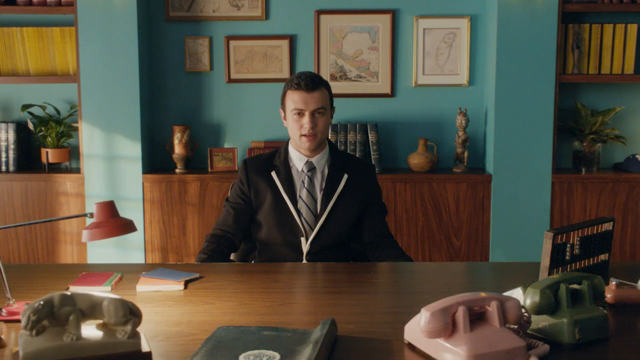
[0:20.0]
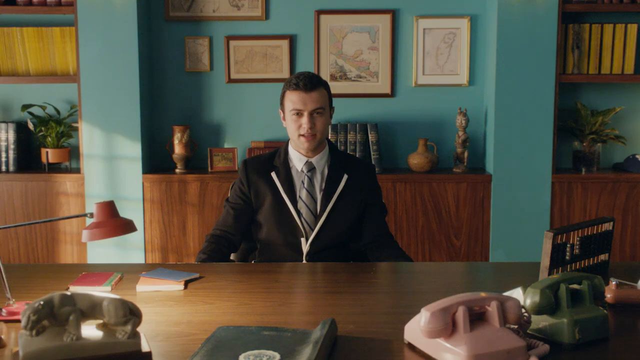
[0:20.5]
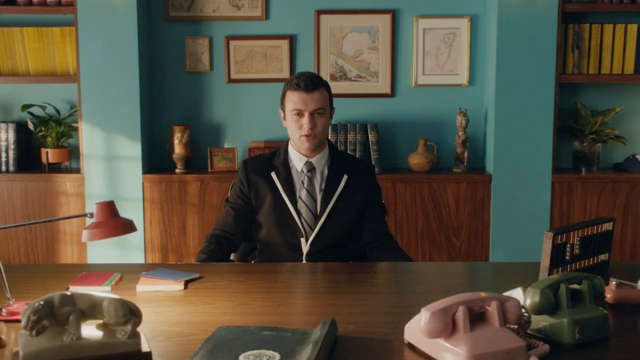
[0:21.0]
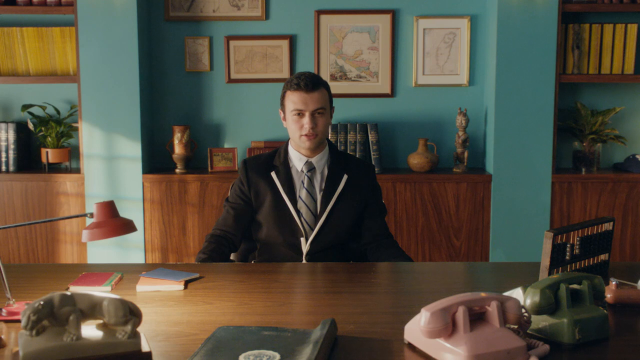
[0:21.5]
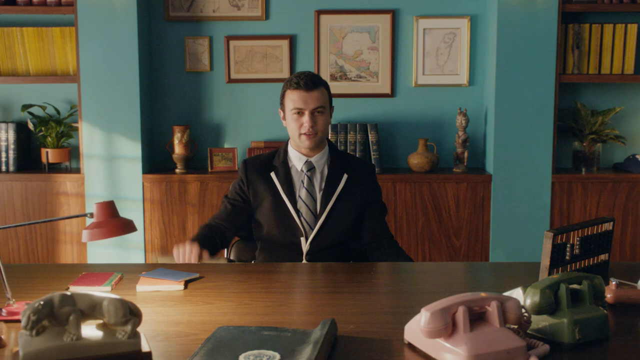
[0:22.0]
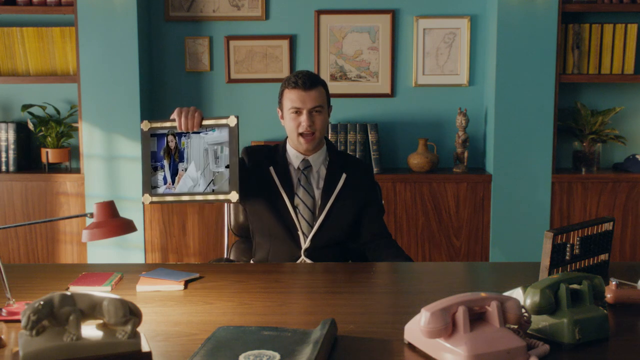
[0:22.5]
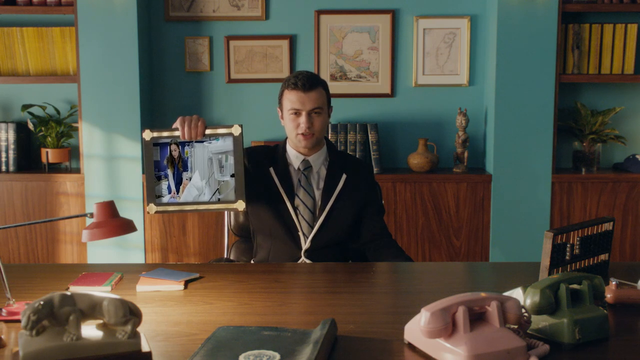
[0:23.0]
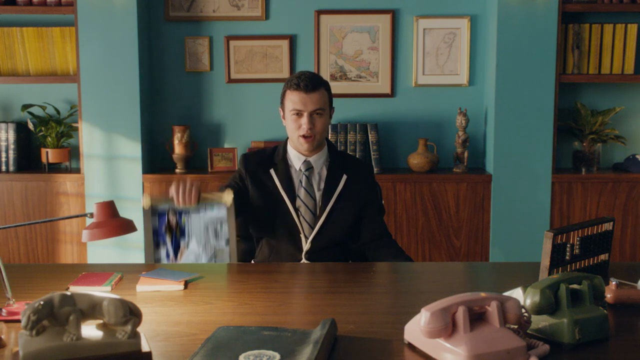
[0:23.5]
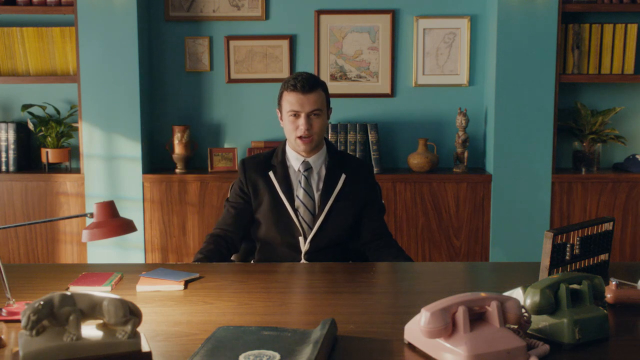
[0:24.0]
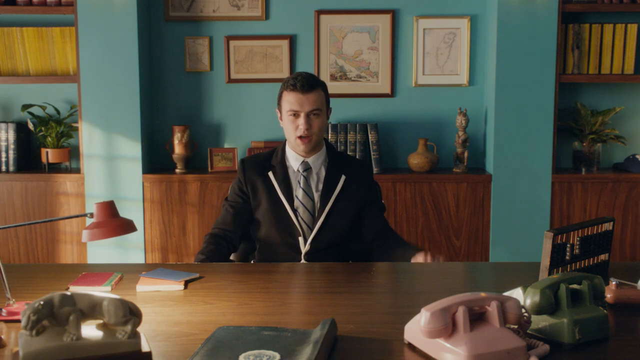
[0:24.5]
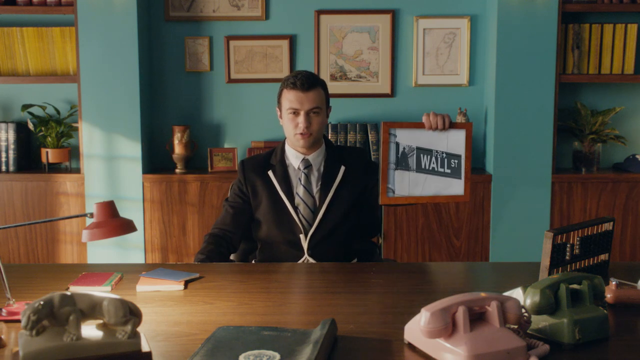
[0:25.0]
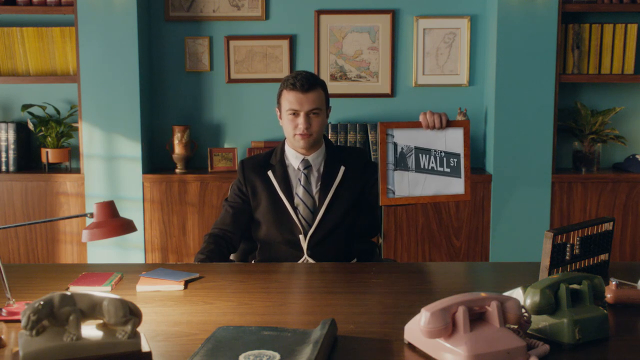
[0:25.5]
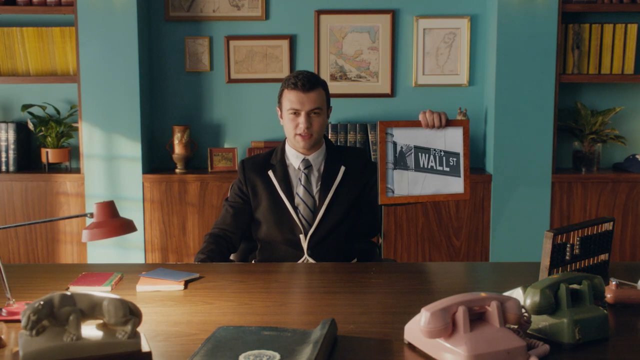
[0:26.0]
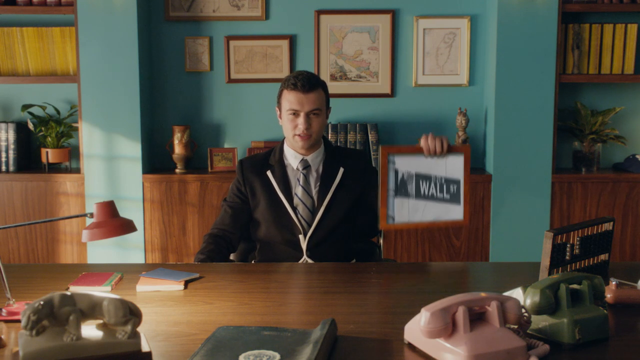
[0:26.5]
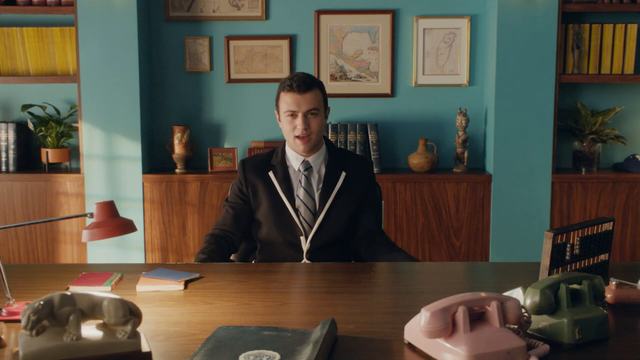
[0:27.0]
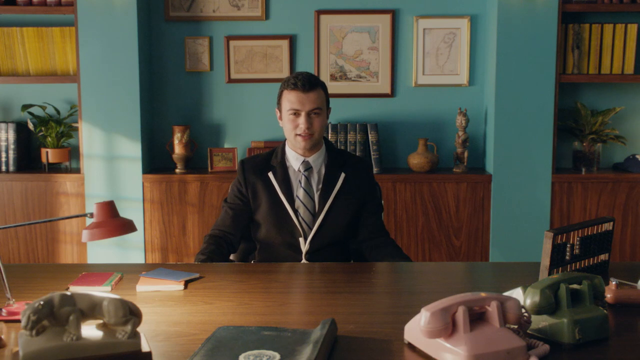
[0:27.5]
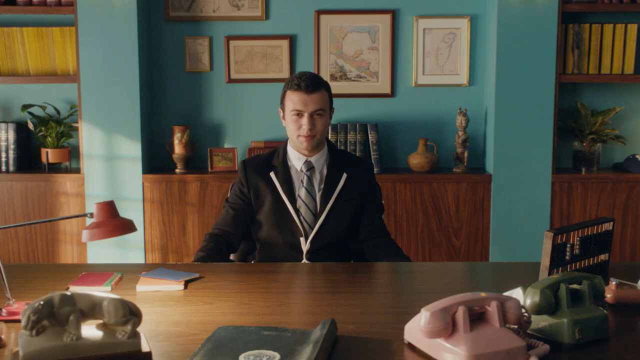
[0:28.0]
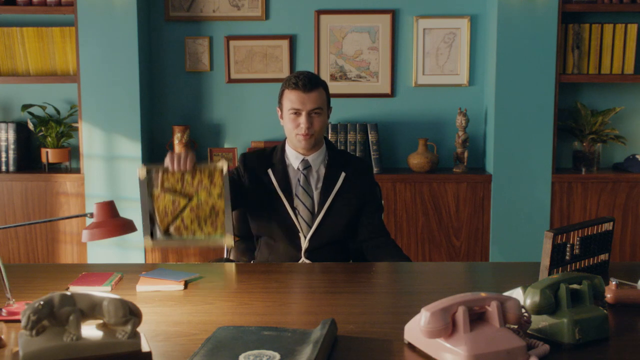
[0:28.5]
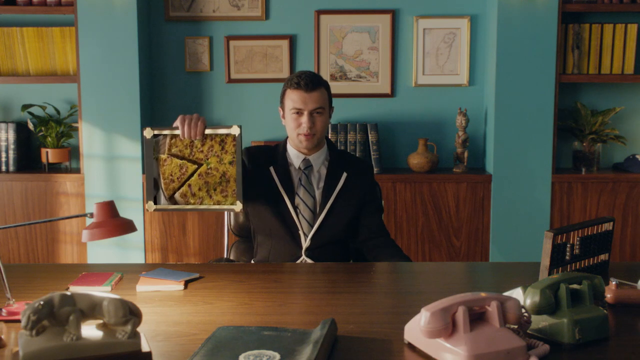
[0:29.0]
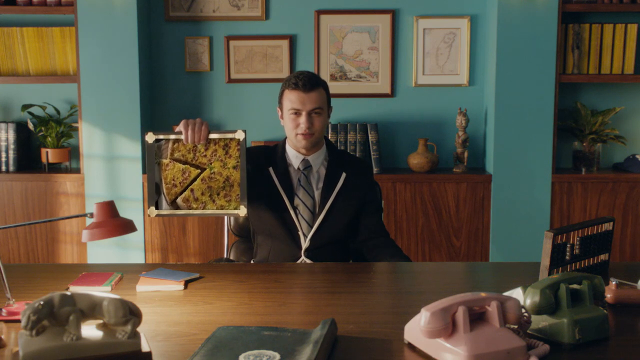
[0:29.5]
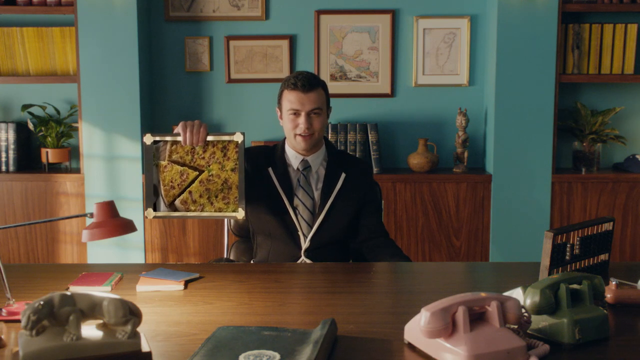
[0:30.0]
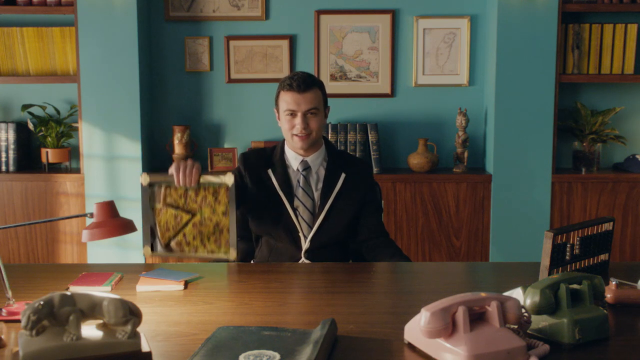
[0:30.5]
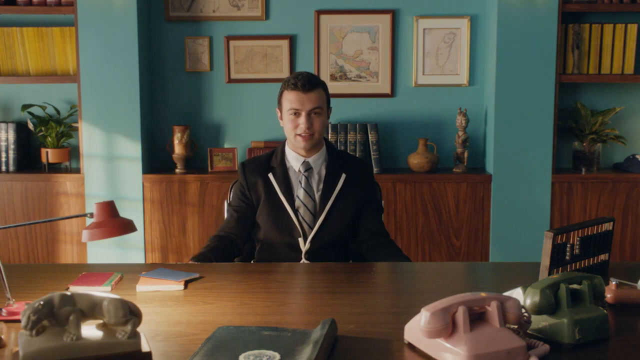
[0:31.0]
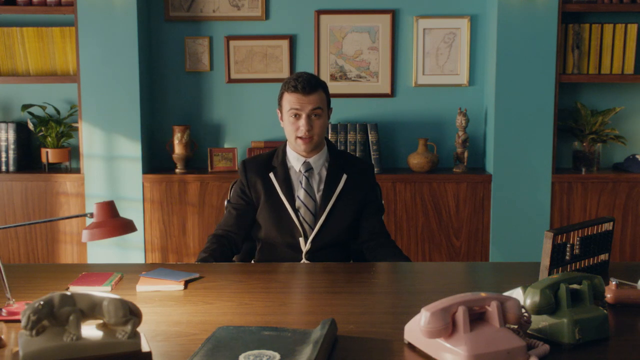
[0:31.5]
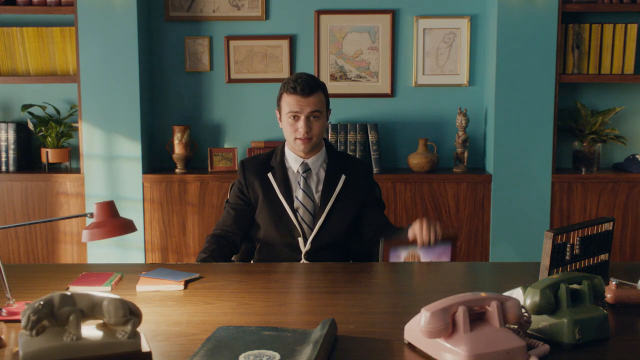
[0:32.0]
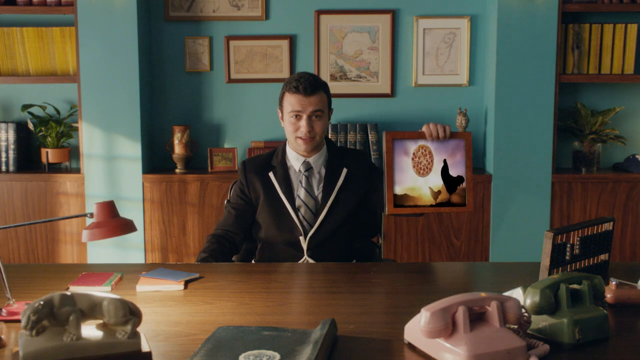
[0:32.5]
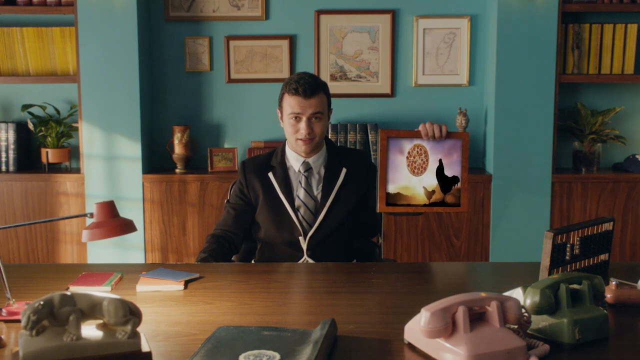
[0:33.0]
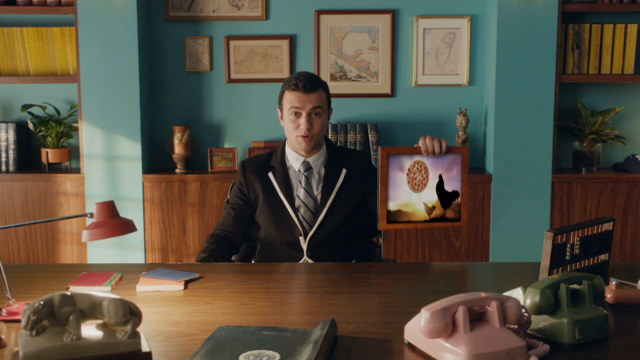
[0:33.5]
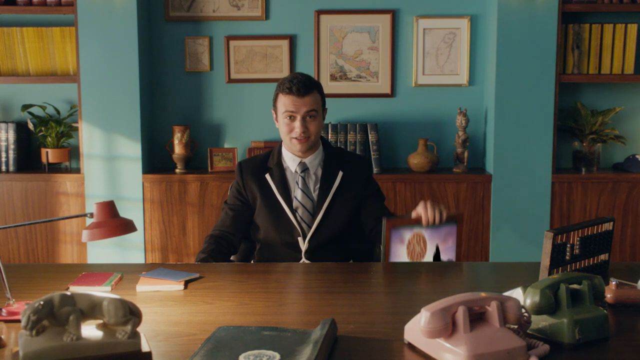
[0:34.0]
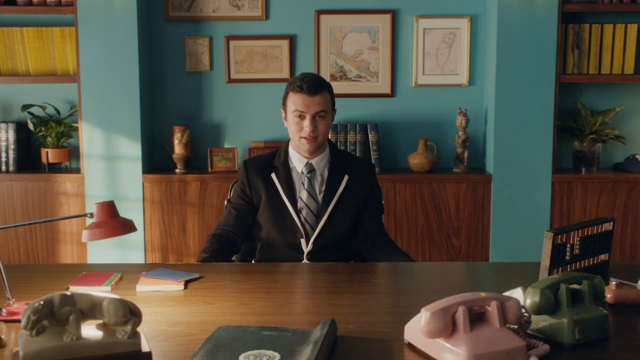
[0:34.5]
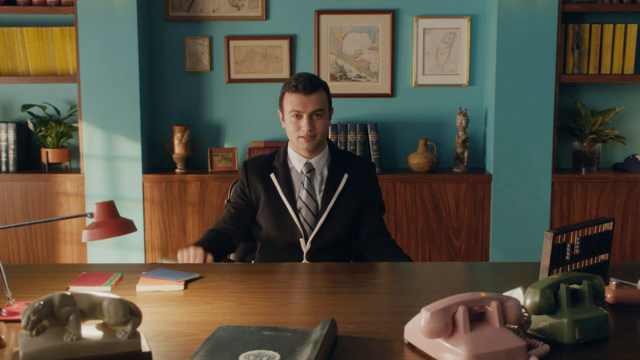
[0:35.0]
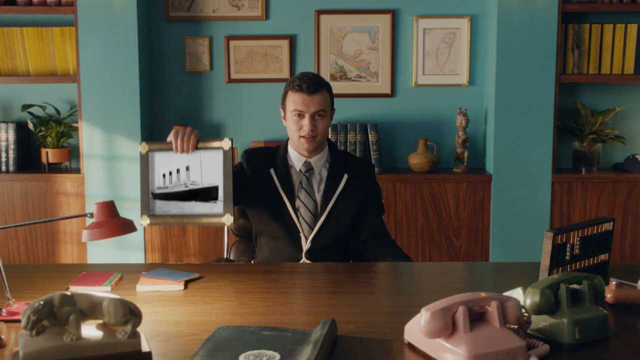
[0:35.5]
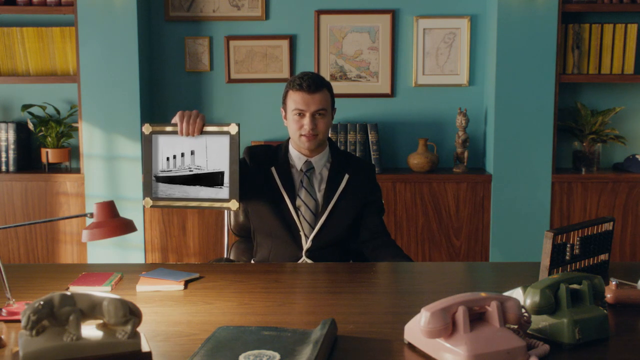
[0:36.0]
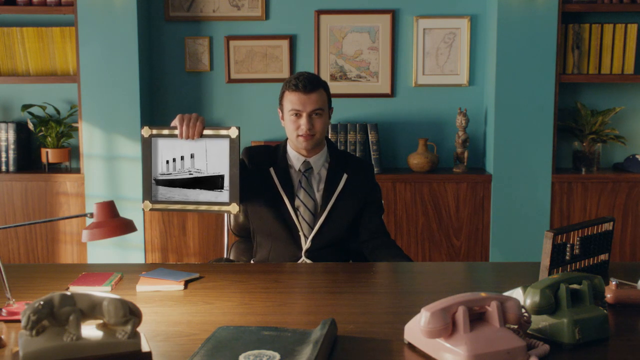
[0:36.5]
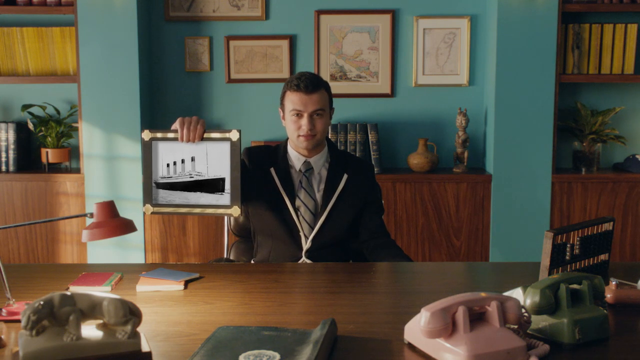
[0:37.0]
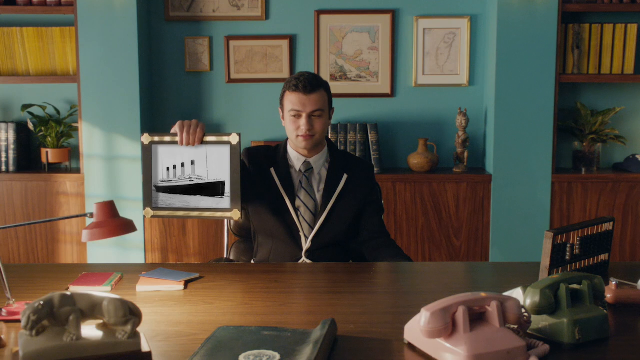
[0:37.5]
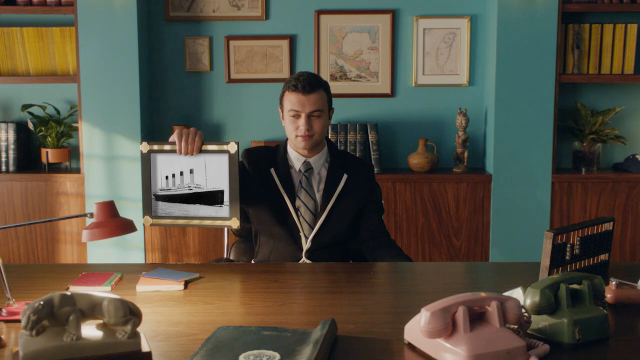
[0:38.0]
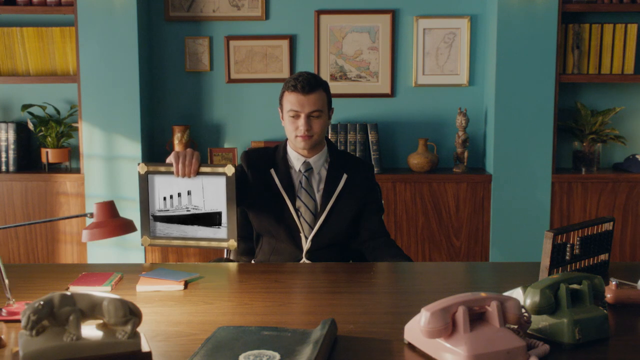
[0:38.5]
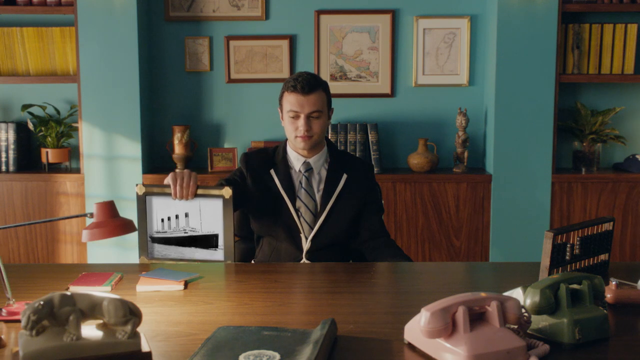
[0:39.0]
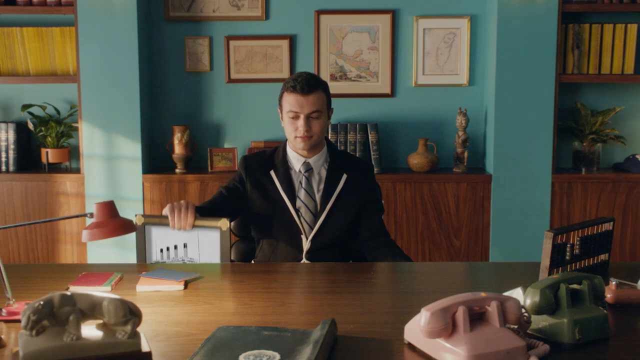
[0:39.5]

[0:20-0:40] A white man with brown hair, wearing a black suit jacket, a white dress shirt and a green tie with black stripes, looks at the camera while sitting at a desk. On the desk is an orange-red lamp, and there are some books on the left side of the desk. Behind him is a wall painted teal-green, with several picture frames holding artwork. Below the artwork is a cabinet with books, a statue, a vase and other decor items on top. The man talks to the camera, then holds up a silver picture frame with a photo inside that has a person on its left-hand side. He lowers that picture so it can no longer be seen and holds up a different picture with his right hand, showing a Wall Street sign.